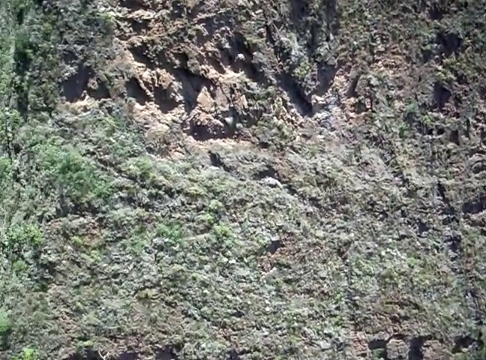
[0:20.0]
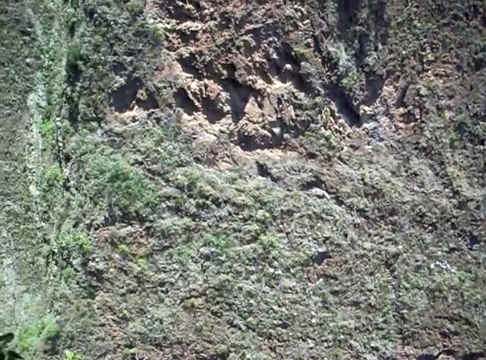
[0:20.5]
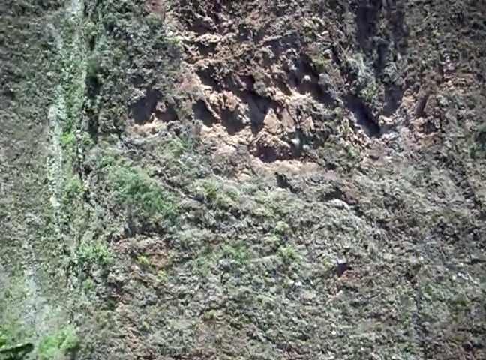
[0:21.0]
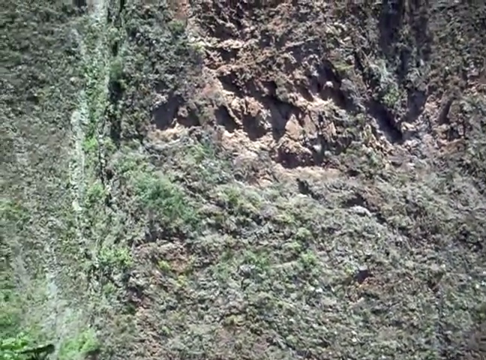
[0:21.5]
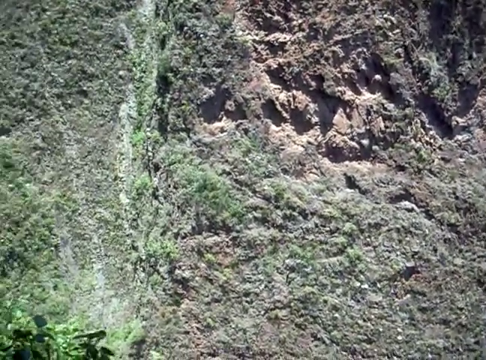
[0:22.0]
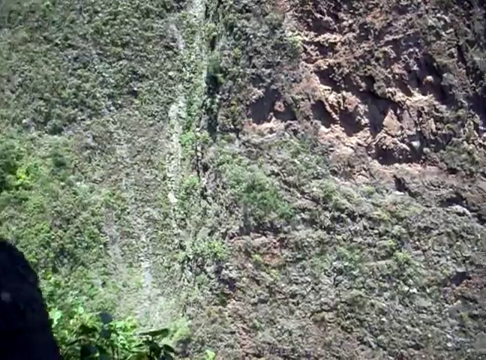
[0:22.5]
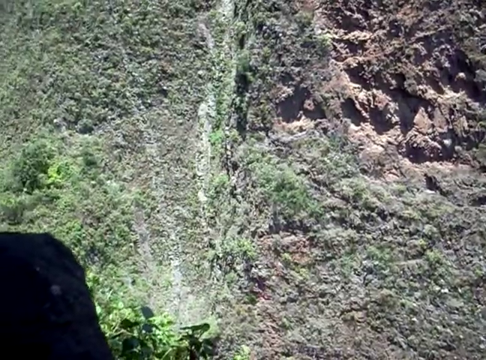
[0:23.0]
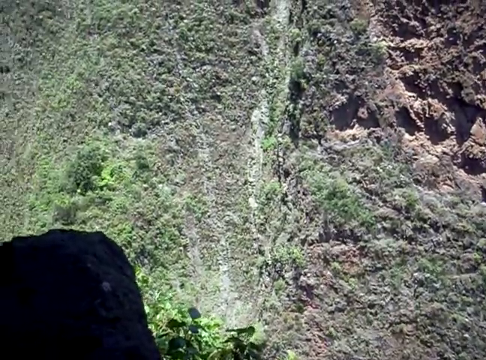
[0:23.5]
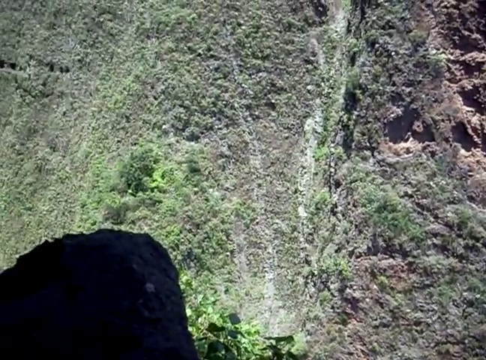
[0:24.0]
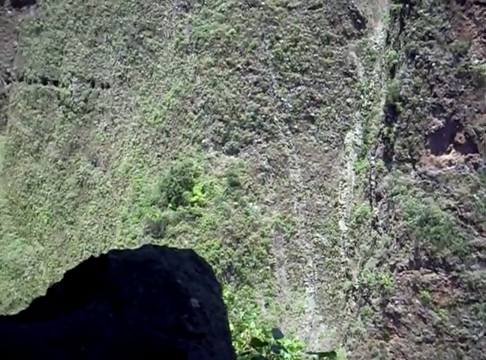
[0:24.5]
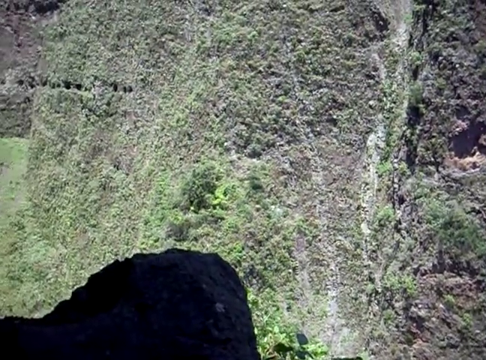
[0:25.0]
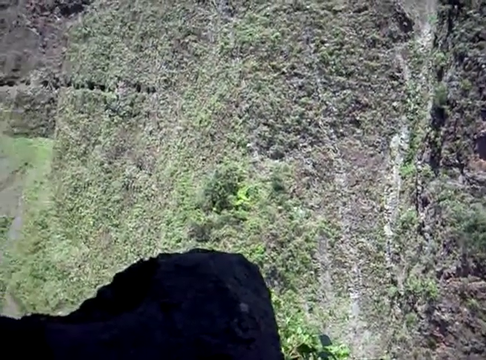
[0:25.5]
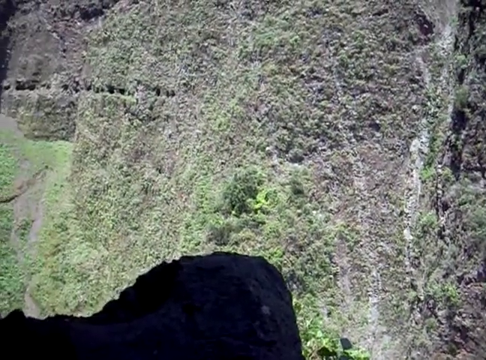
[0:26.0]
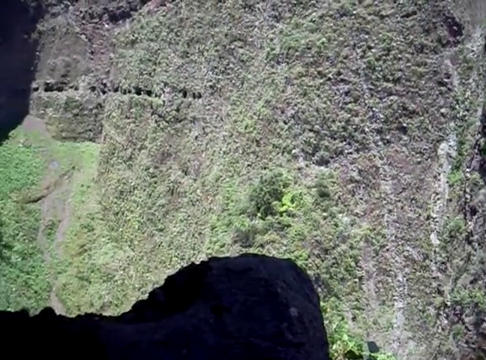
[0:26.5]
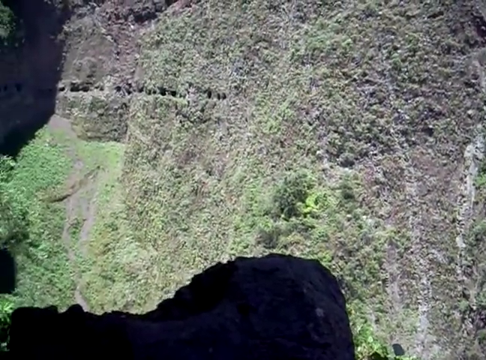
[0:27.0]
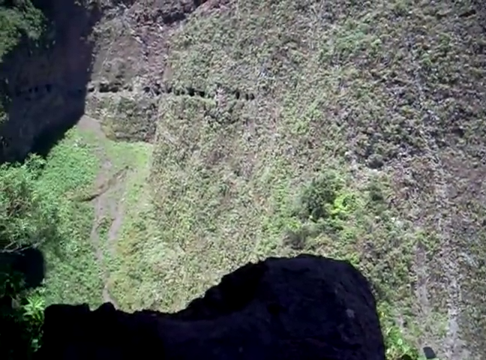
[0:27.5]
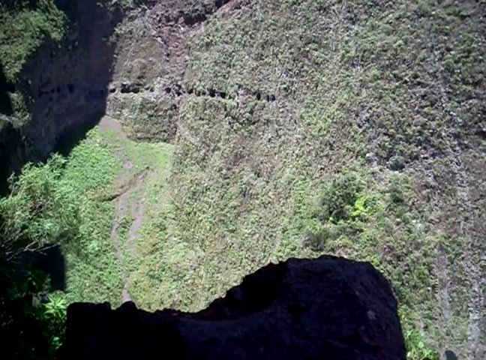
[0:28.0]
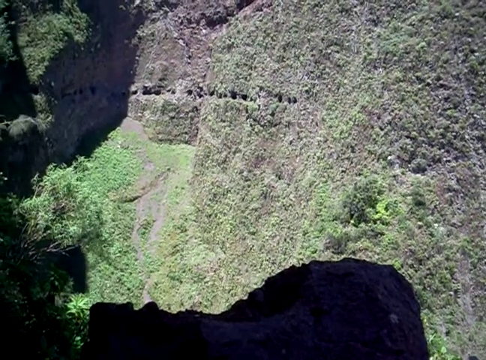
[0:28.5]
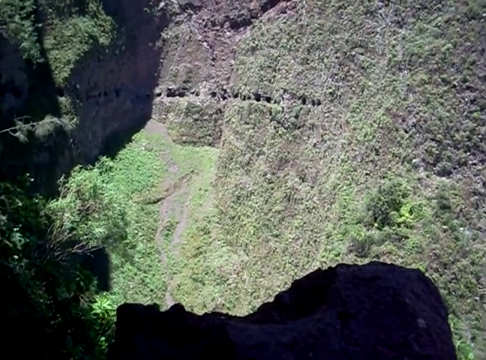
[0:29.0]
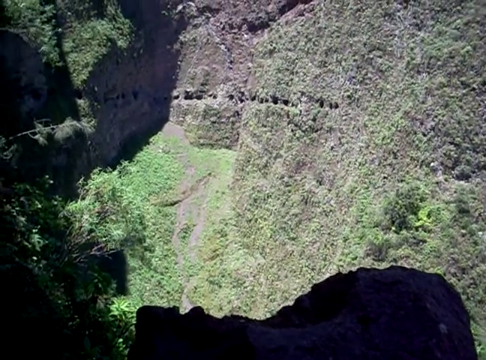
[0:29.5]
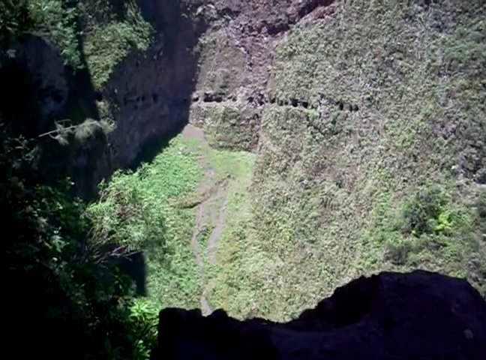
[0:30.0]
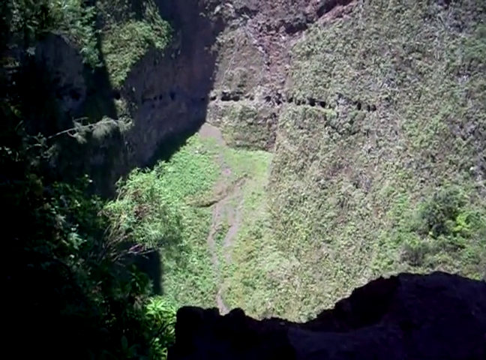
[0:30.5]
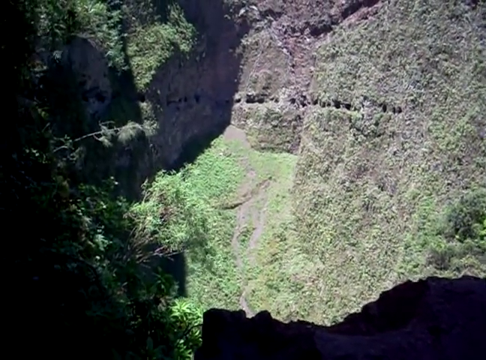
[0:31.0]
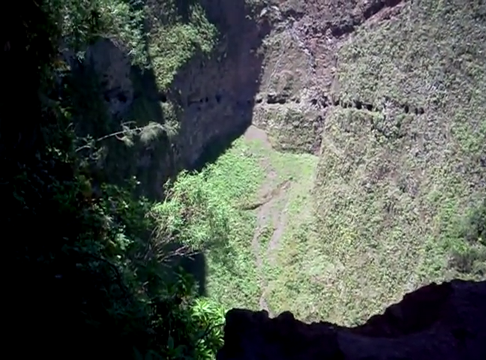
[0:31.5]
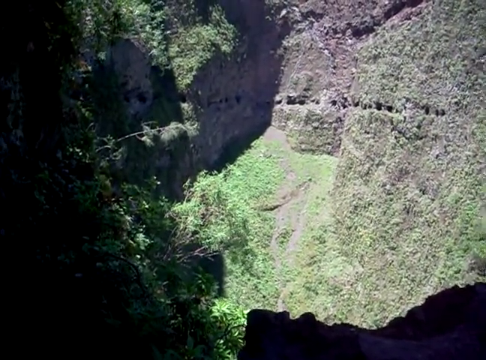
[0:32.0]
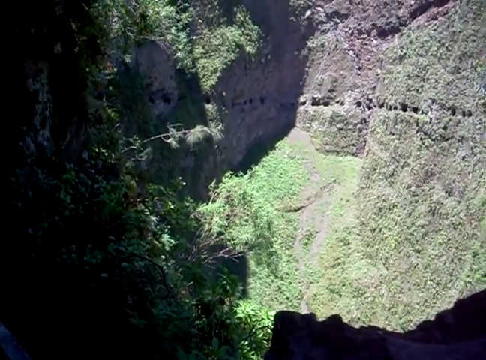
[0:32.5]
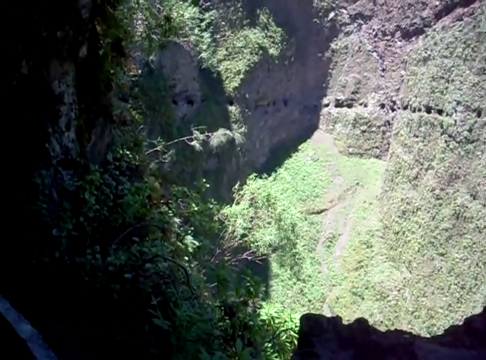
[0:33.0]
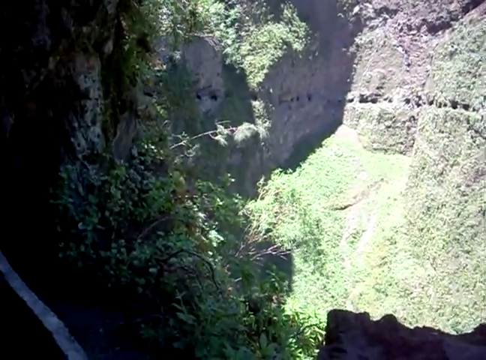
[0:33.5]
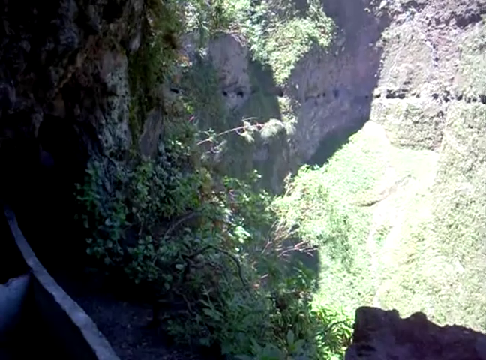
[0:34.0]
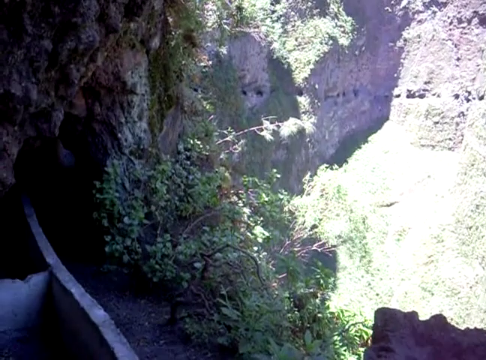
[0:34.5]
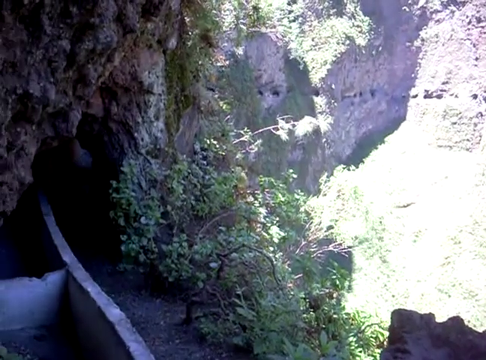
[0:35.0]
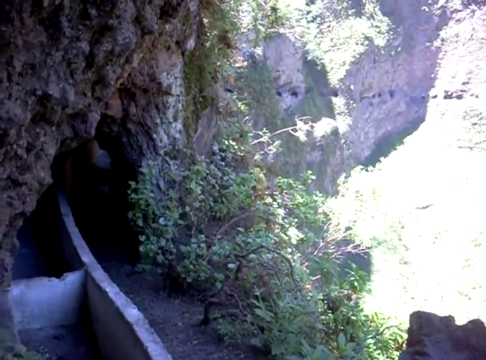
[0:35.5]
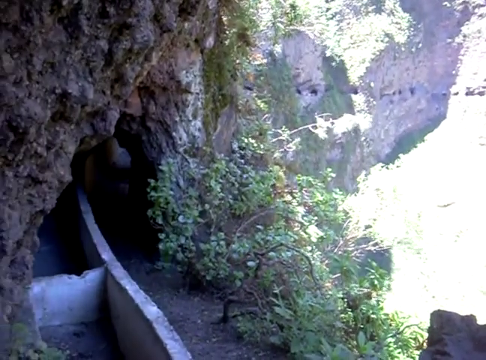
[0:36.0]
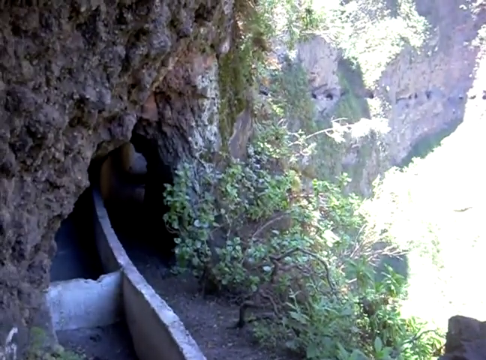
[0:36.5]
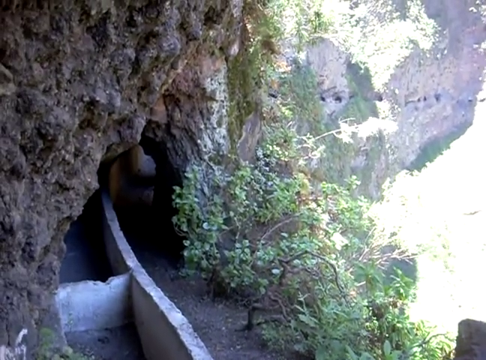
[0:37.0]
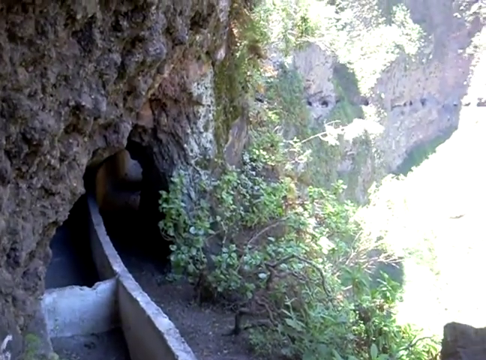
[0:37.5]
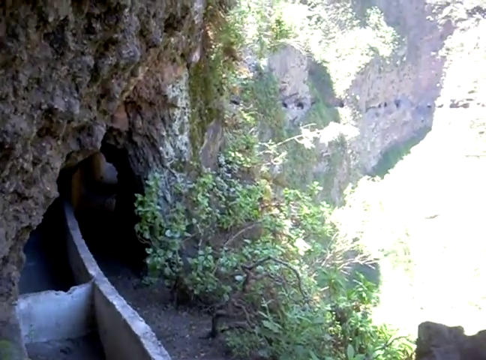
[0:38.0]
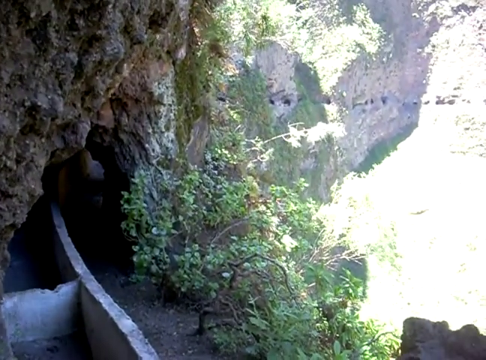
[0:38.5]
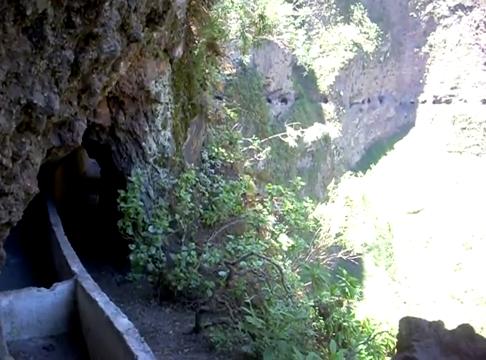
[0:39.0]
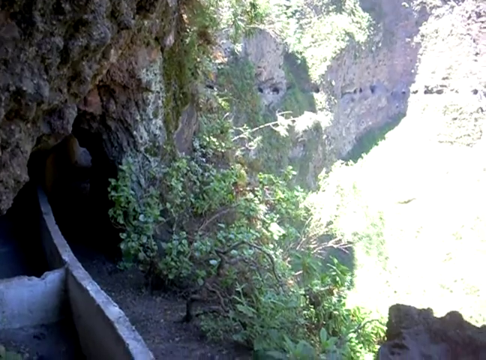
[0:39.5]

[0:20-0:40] The opening of the channel appears to go out into the side of the mountain, and the view looks downward on the side of a mountain through a hole in the wall. A number of pathways appear to have been created and are visible in the panoramic view, and the outside looks pretty steep. The channel, still visibly a man-made tunnel, is on the left-hand side of the image. At the outside there is light, and the view is at the very edge of the area. Moss is on the wall, and the view looks across the way and shows how deep it goes, very deep, as if from the center of the mountain or hillside. This is probably the end of the hallway, with no other way to go but back in.